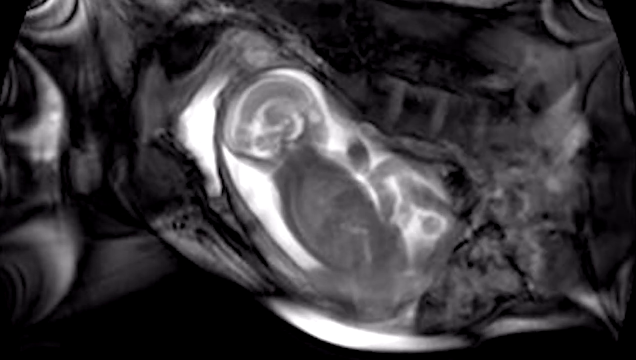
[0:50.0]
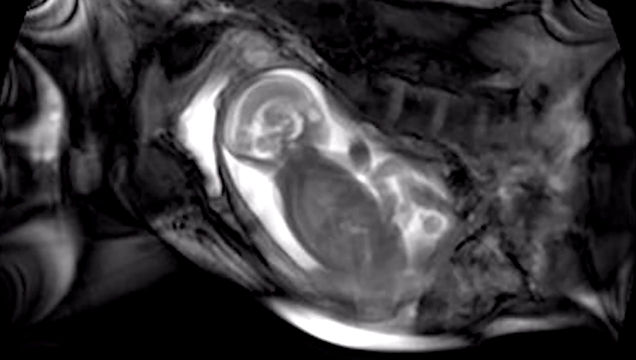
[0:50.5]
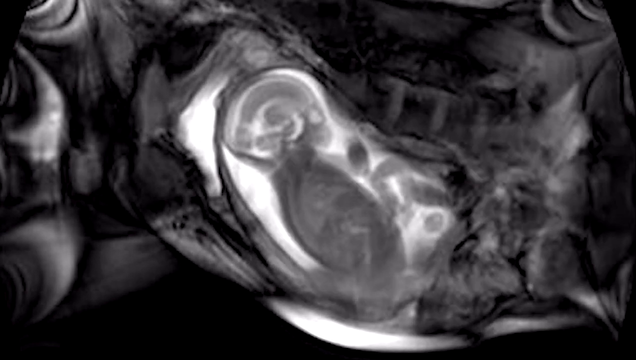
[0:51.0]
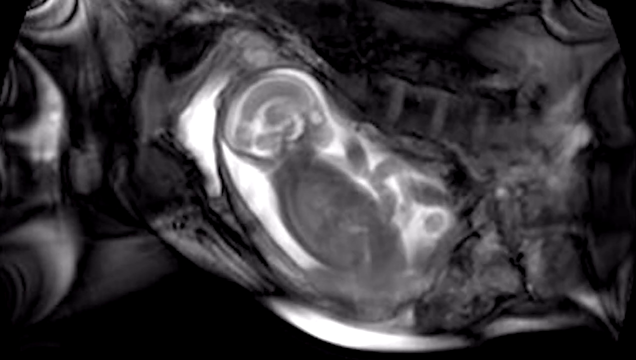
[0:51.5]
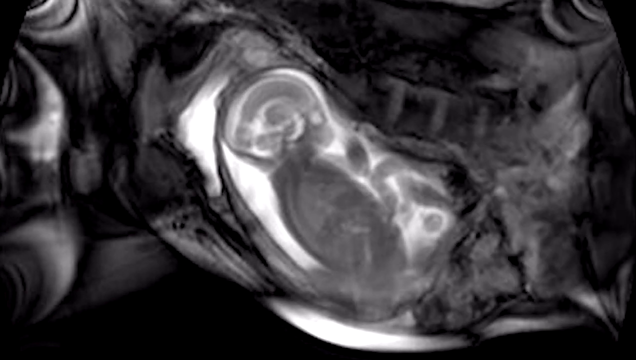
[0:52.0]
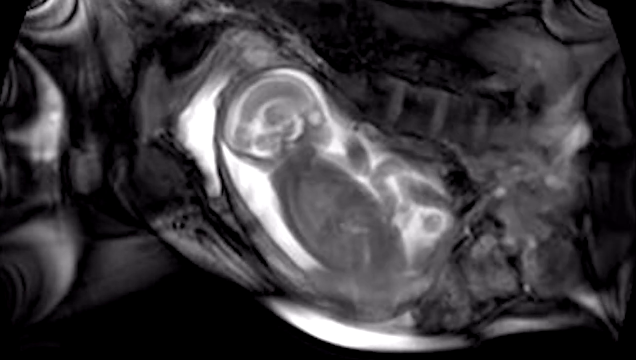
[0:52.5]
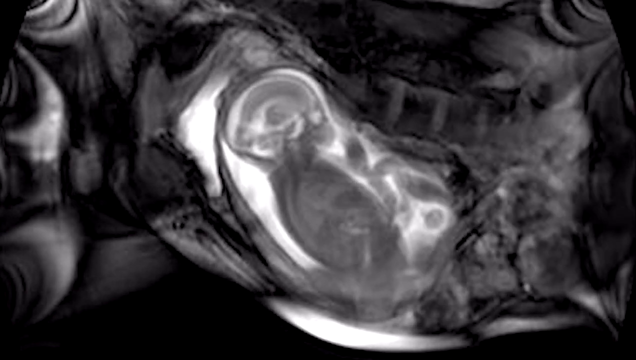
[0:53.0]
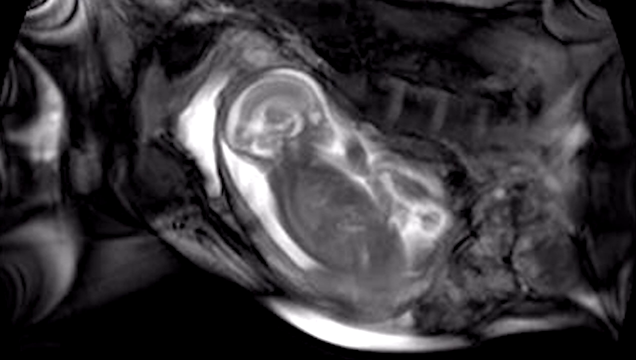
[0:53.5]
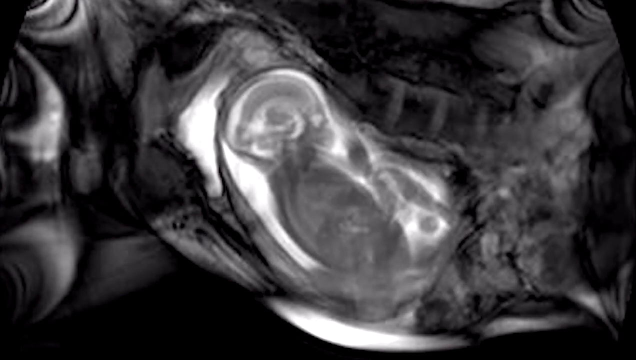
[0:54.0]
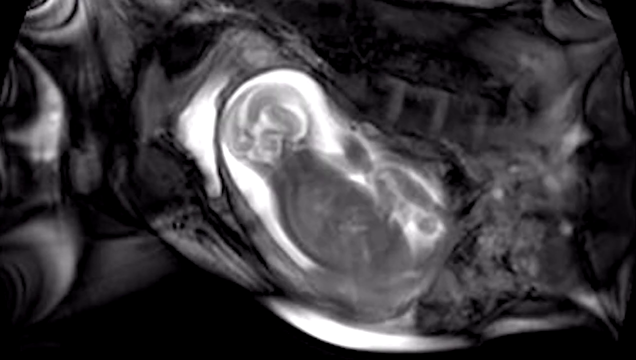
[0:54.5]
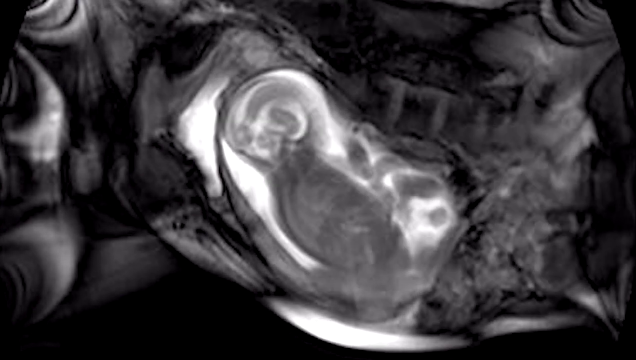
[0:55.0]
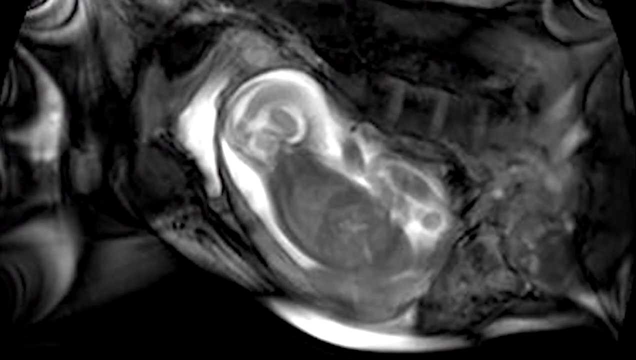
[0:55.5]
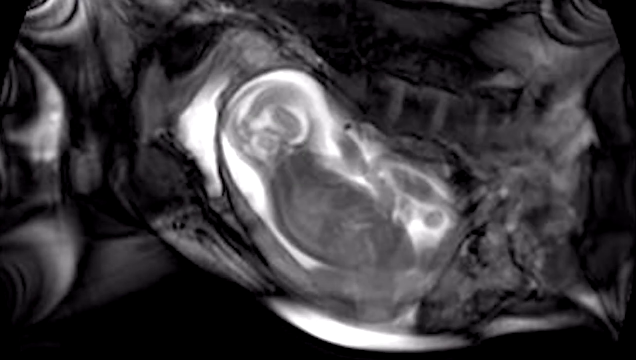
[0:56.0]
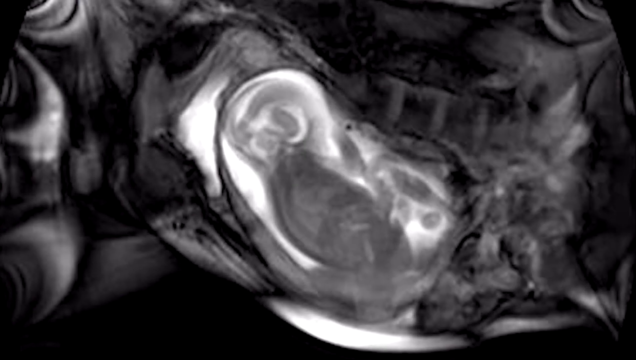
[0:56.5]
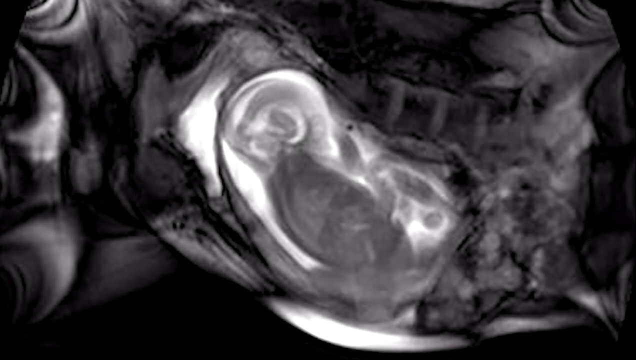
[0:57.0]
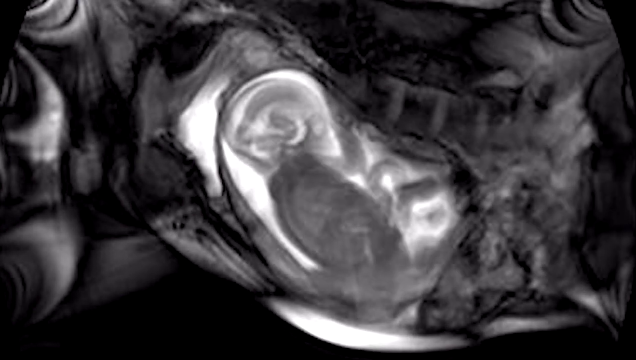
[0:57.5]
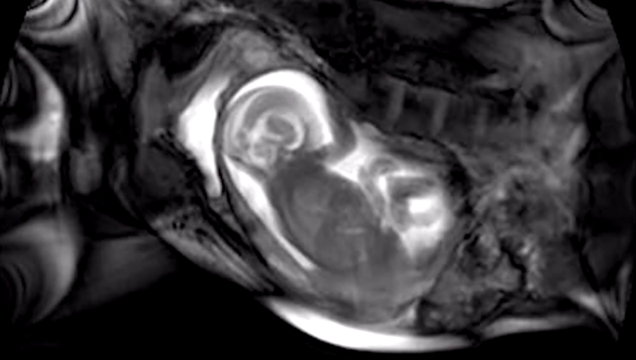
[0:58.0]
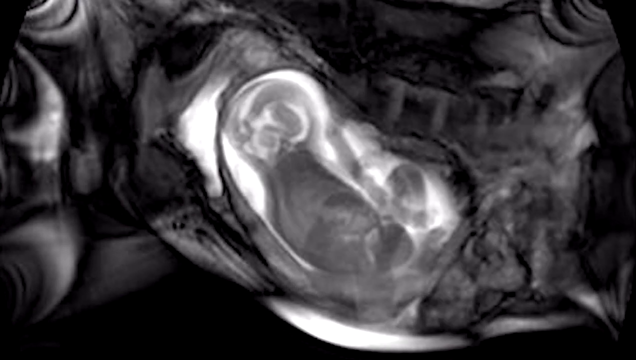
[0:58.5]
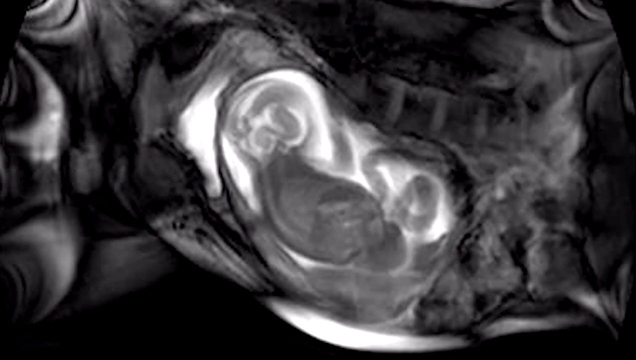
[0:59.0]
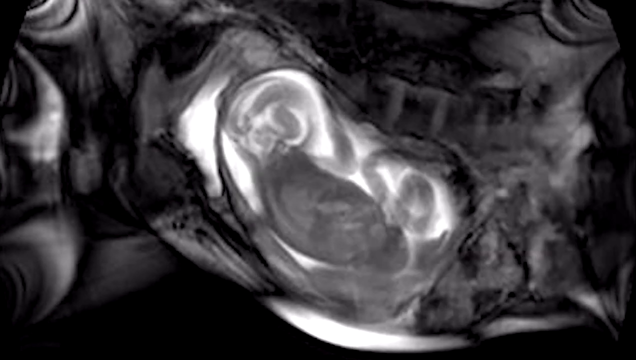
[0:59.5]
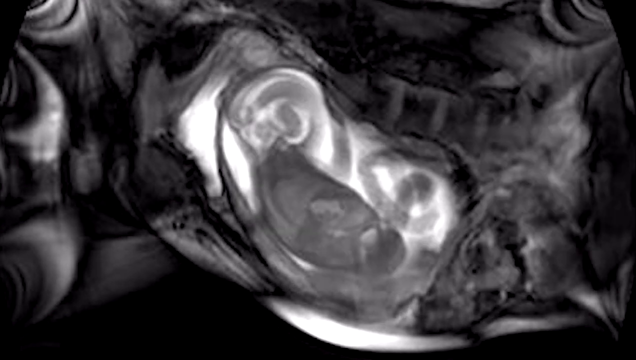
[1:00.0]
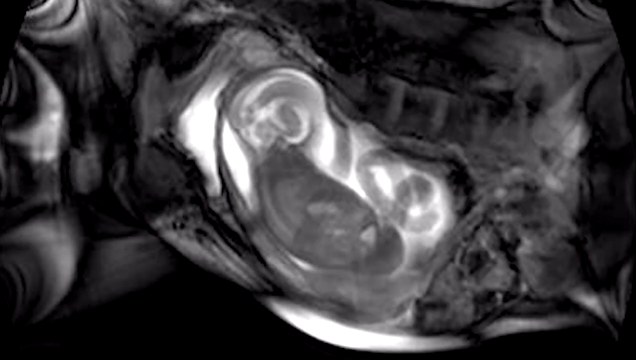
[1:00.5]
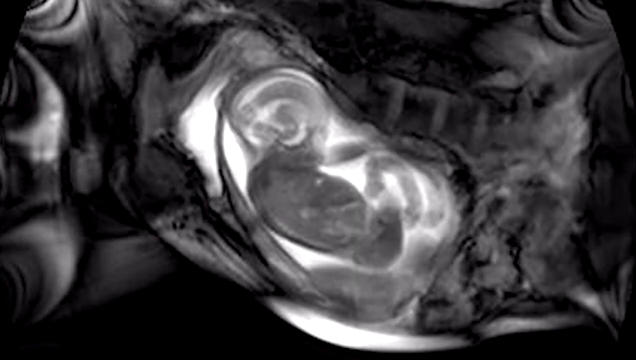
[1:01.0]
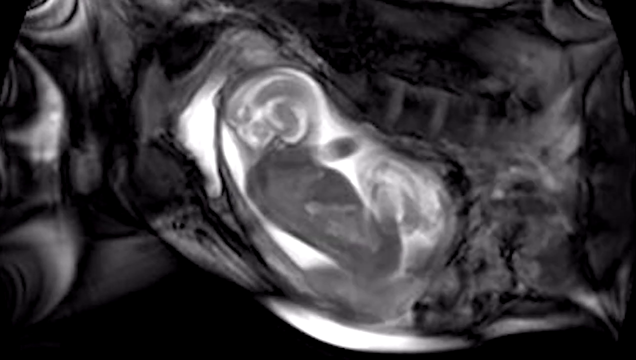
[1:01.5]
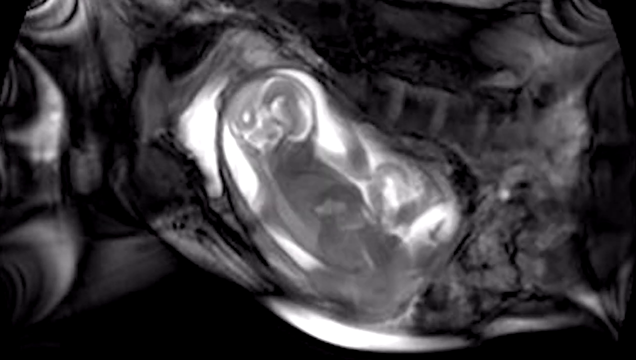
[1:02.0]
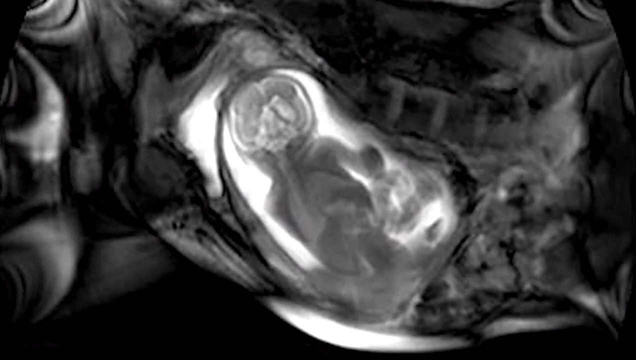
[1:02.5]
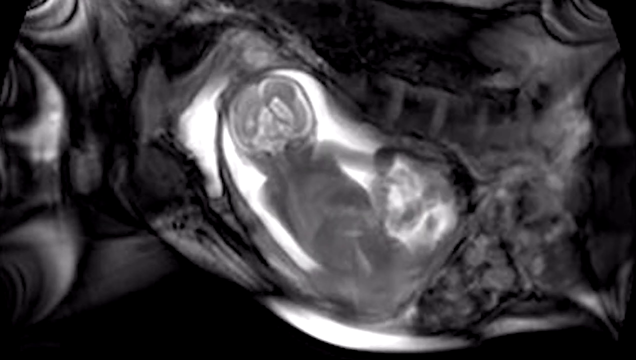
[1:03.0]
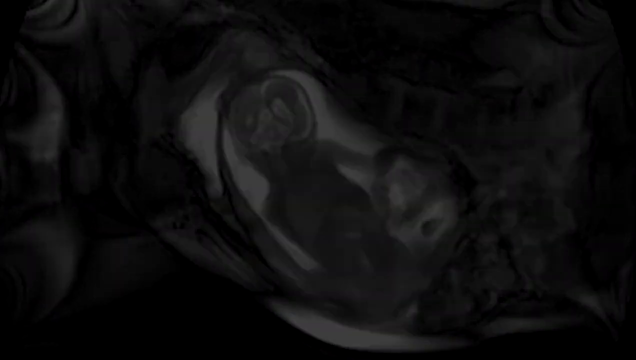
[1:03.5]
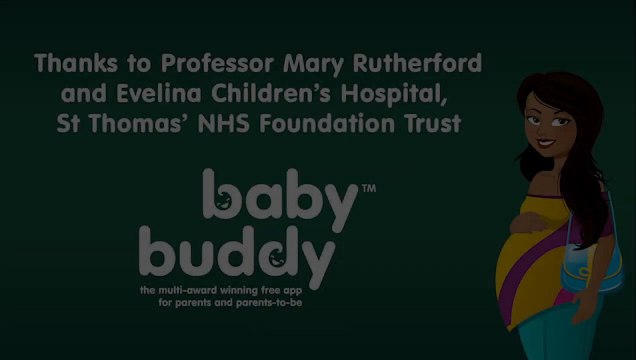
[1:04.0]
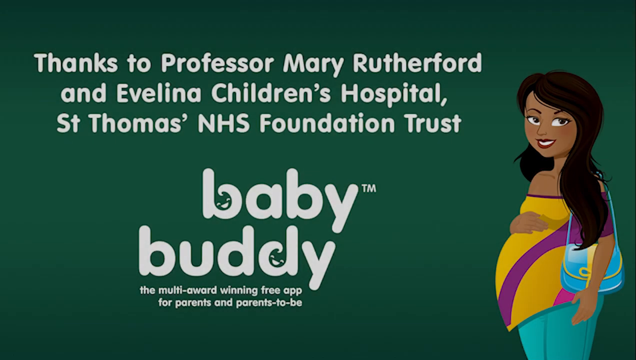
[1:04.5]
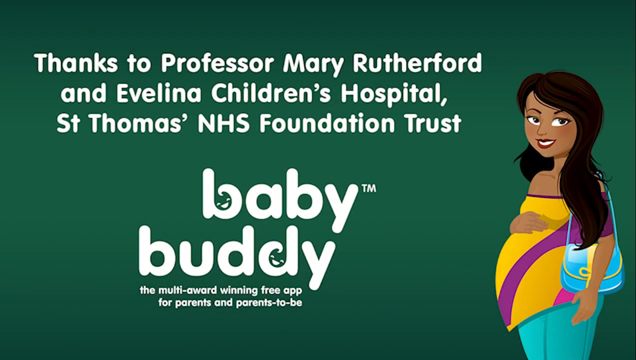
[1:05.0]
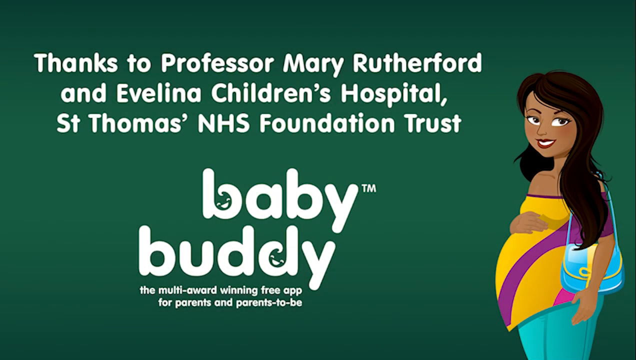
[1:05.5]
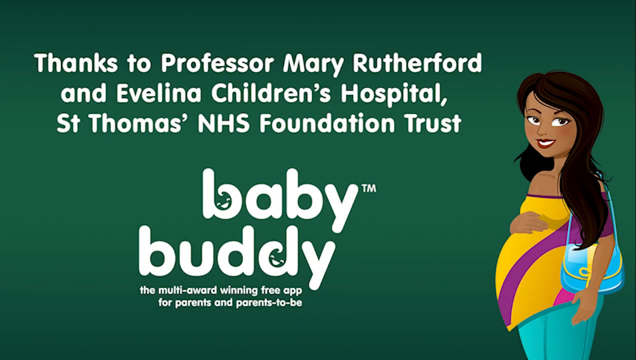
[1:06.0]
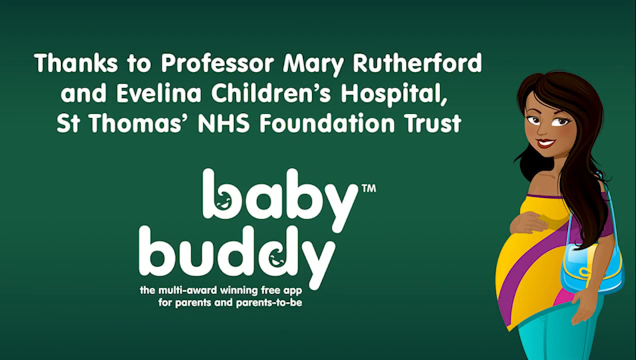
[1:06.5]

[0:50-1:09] A baby is in an amniotic sac, with outlines of the brain visible and a white color kind of within the sac. A bunch of dark shadows surround it, looking like some organs or something similar. There appears to be movement on the right side, possibly a heart beating. The baby inside the sac is kind of moving a little, moving its head, feet and arms, and looks kind of uncomfortable as it repeatedly continues to move around. The video then transitions to a green background with white text that says "thanks to Professor Mary Rutherford and Avelina Children's Hospital St. Thomas NHS Foundation trust Baby Buddy the multi award-winning free app for parents and parents-to-be". A drawing of a pregnant woman is shown.